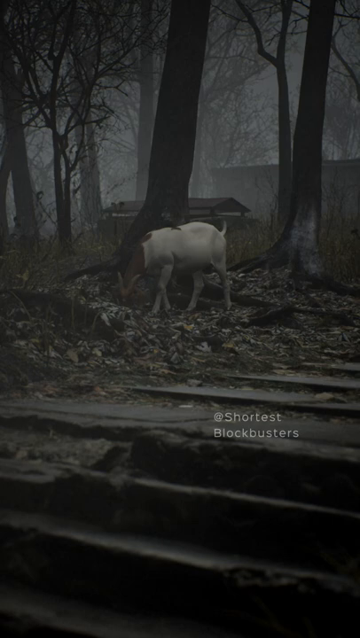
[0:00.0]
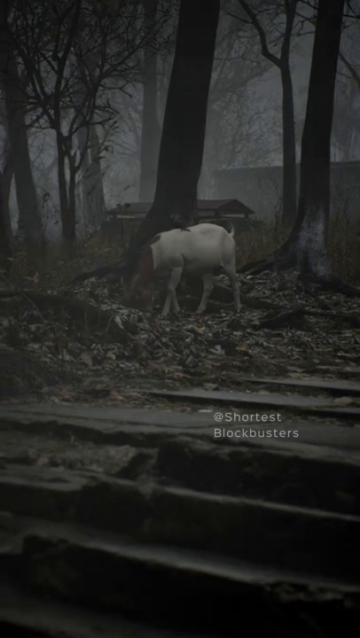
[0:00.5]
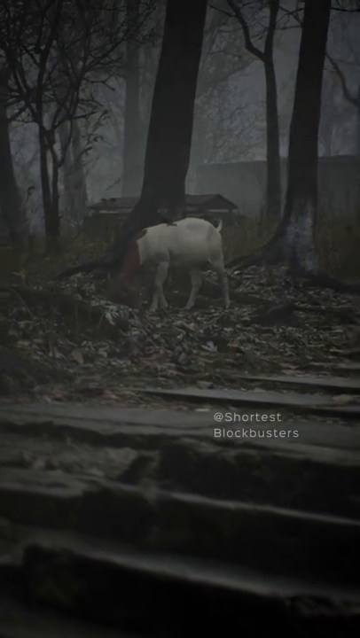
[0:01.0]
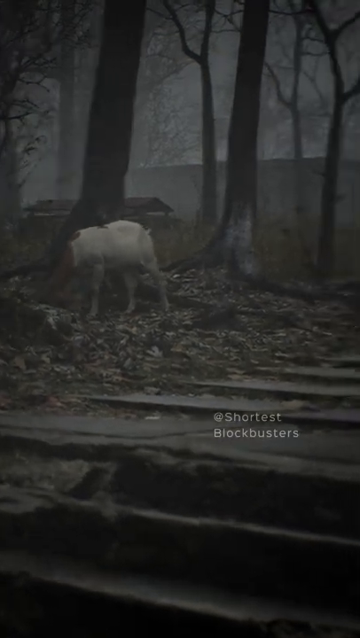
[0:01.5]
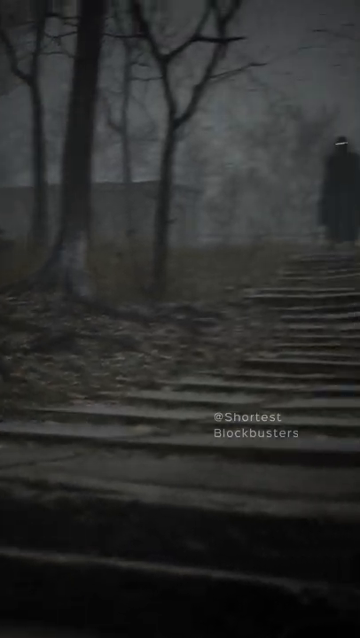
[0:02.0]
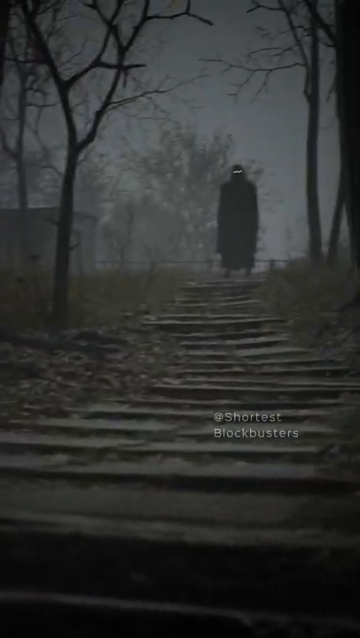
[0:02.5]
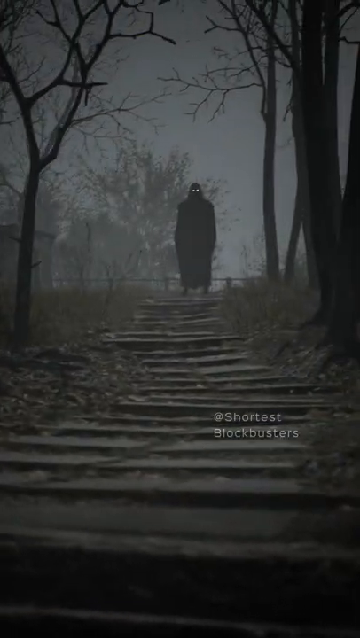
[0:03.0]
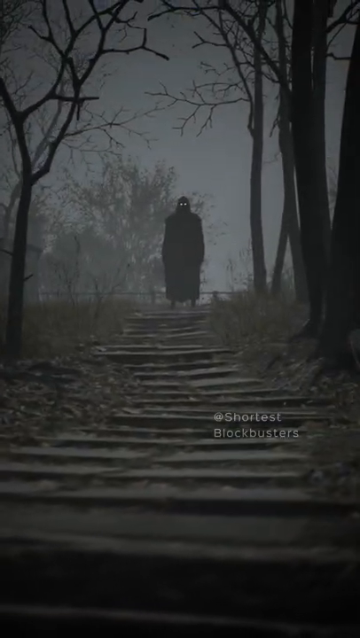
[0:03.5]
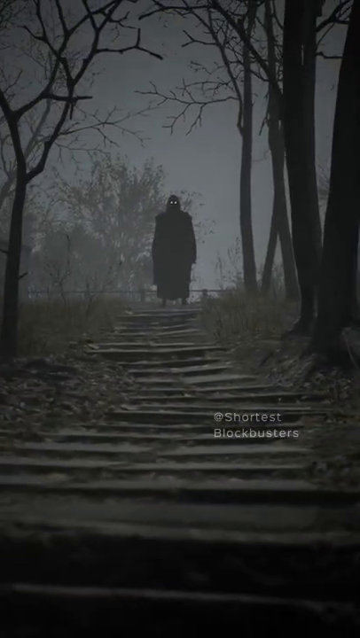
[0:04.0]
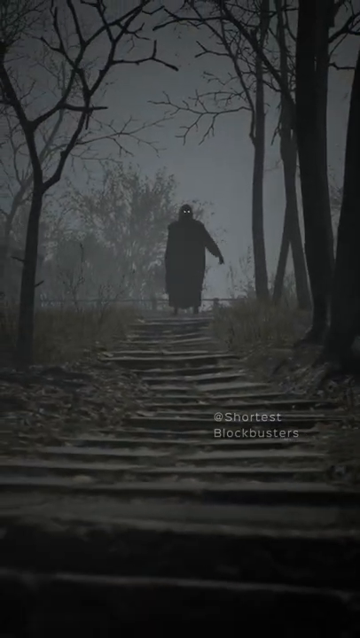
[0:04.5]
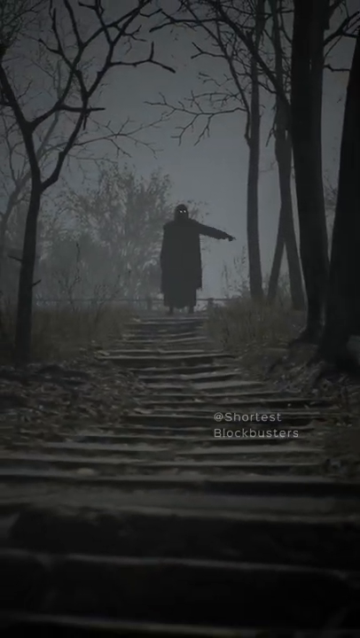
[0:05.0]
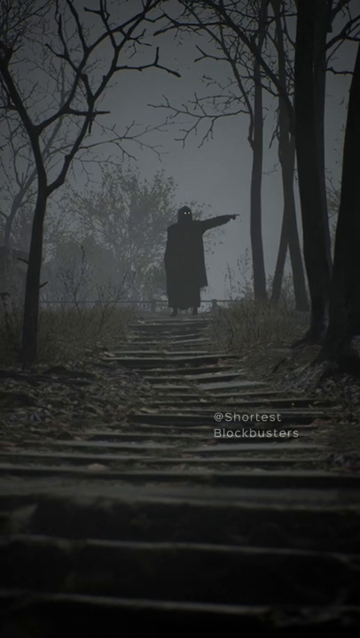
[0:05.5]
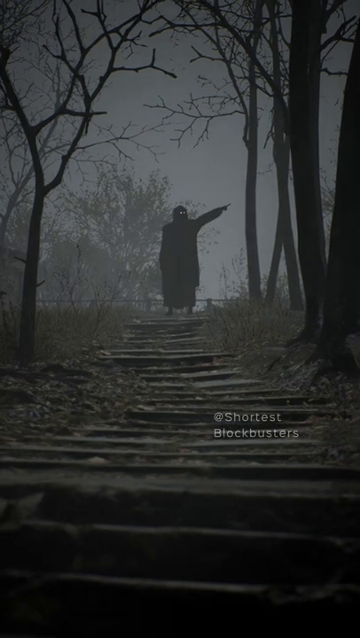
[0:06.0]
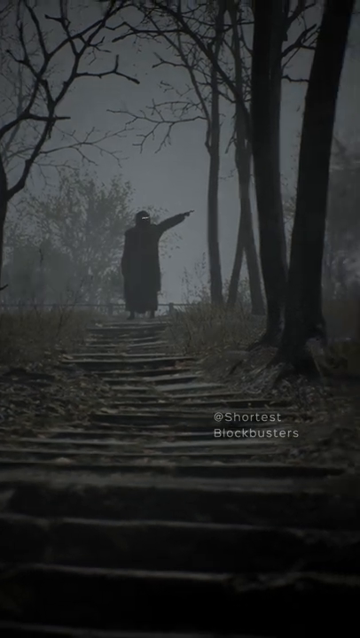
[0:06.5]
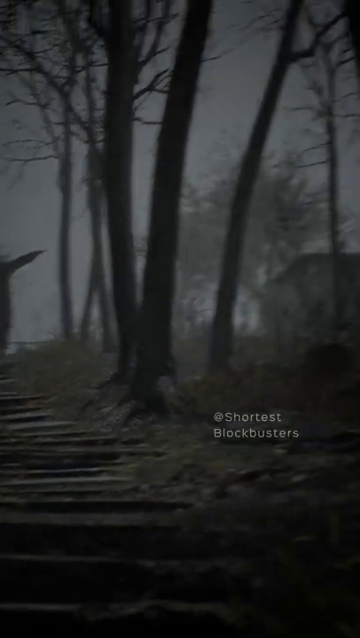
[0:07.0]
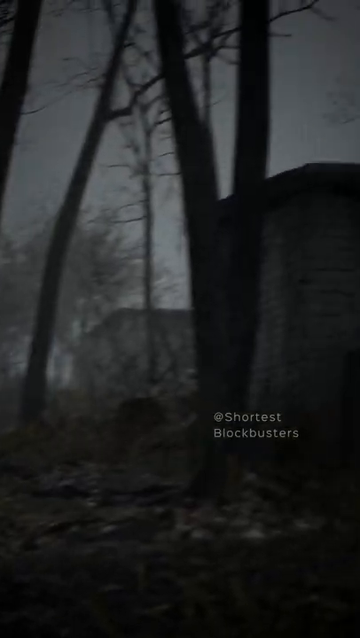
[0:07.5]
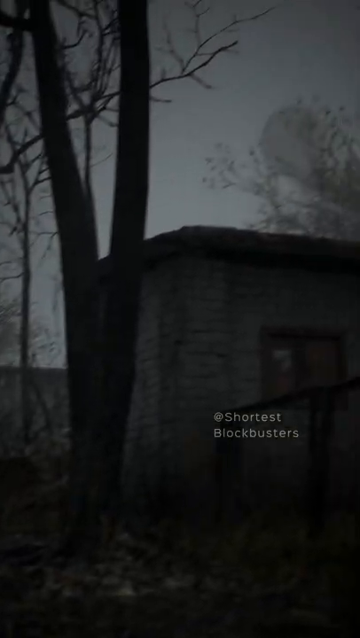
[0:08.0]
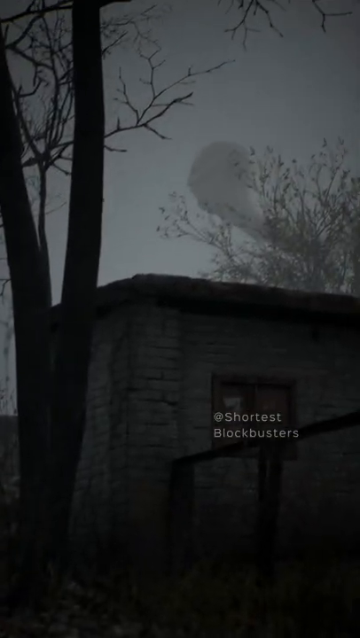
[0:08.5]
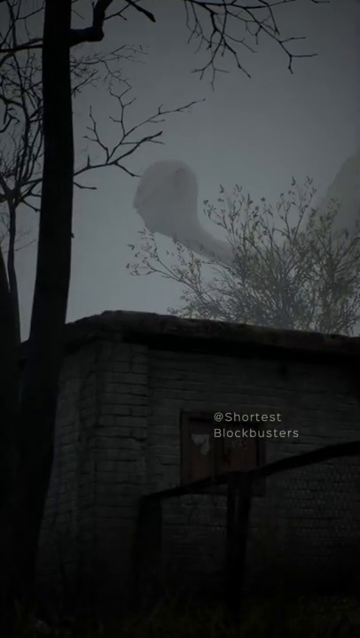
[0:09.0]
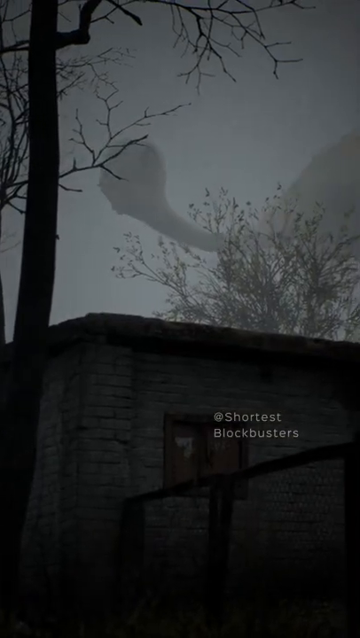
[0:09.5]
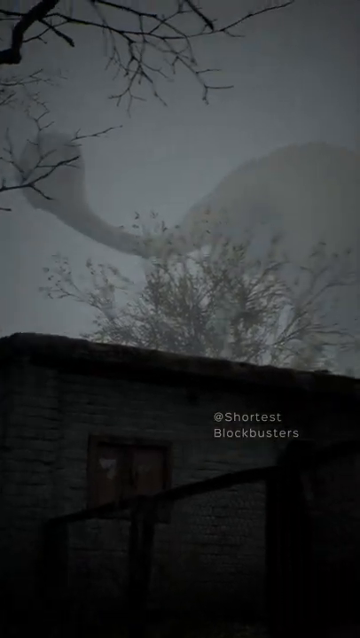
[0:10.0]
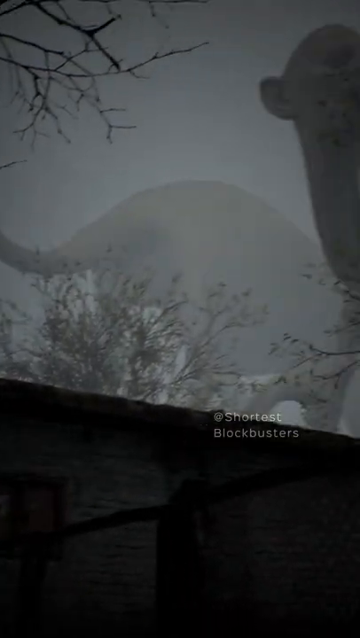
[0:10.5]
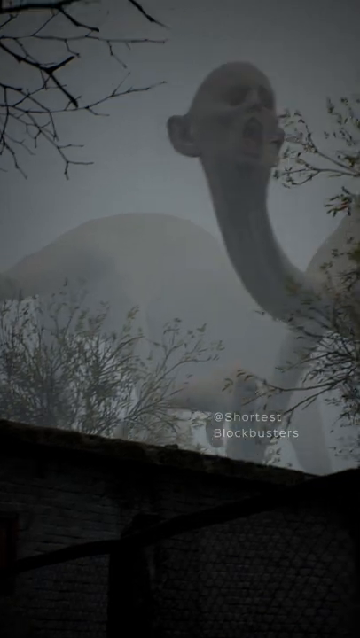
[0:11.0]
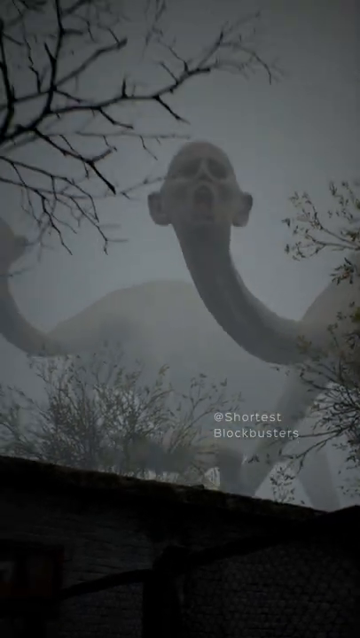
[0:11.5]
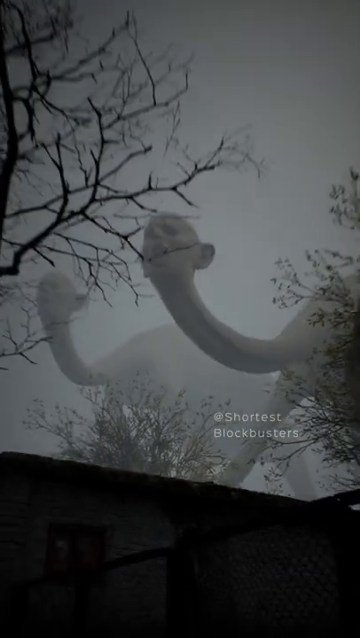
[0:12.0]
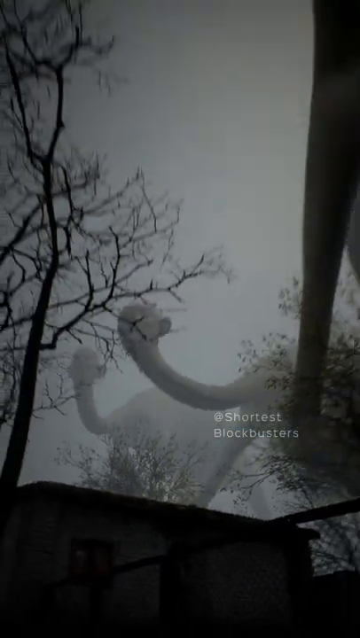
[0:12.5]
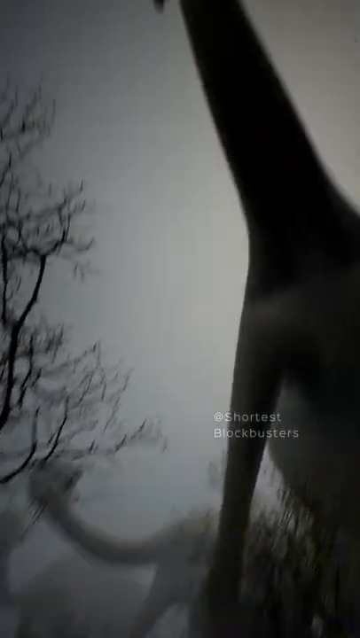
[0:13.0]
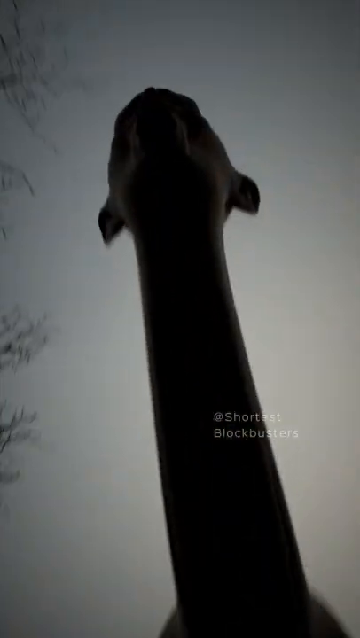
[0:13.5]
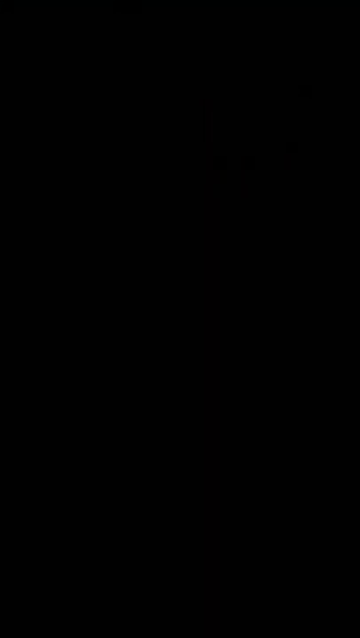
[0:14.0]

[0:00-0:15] An eerie gray forest appears, with some type of white, headless animal standing under tall dark trees. A gray sky is in the background beyond the trees, and there is a wooden stairway near the headless animal. The scene shifts to the top of the stairway, where a large black figure wears a black cape and a black hood, with two bright glowing eyes. Leafless trees and a gray sky are behind him. He raises his right arm straight out and points to something. Next, some building tops appear with huge monsters above the buildings. The monsters have very long necks, long legs and horse-like bodies, and they loom over the buildings in the sky, surrounded by the gray sky. Their long legs and long necks are moving around.